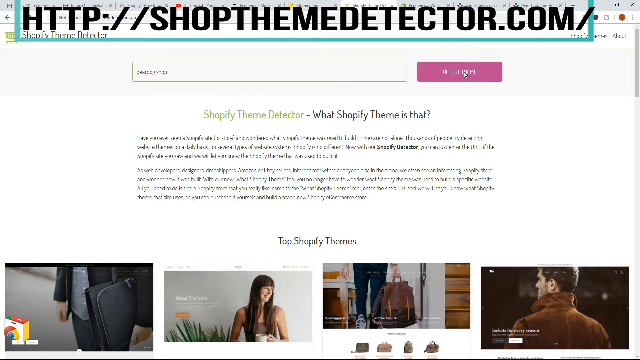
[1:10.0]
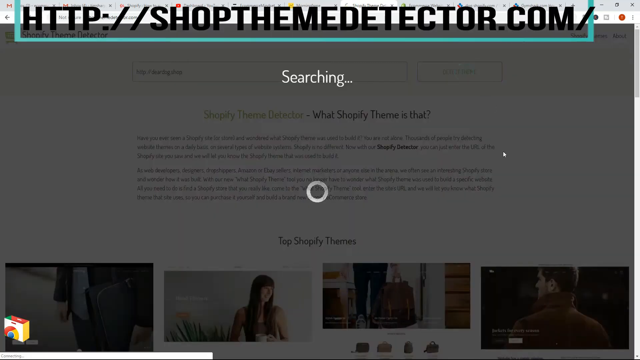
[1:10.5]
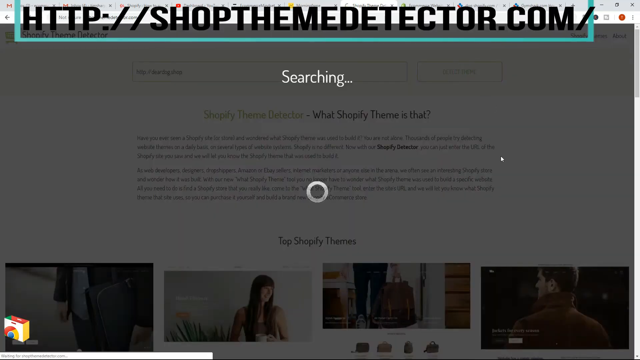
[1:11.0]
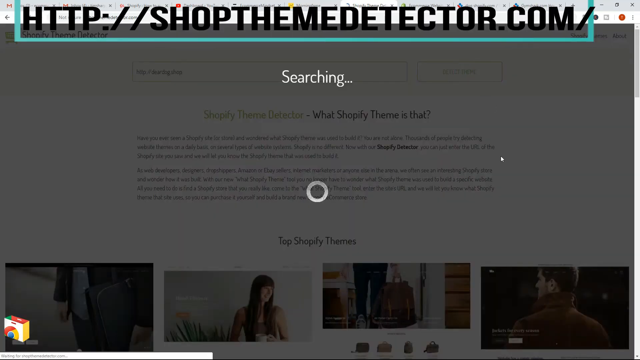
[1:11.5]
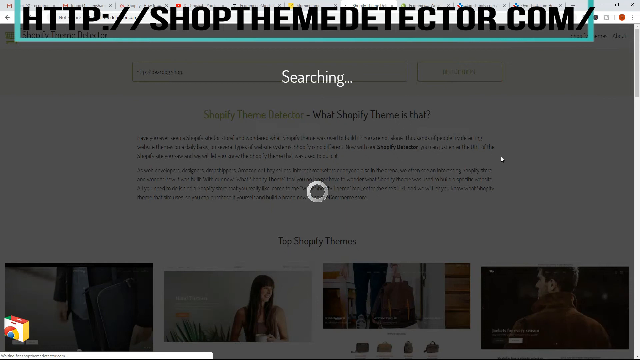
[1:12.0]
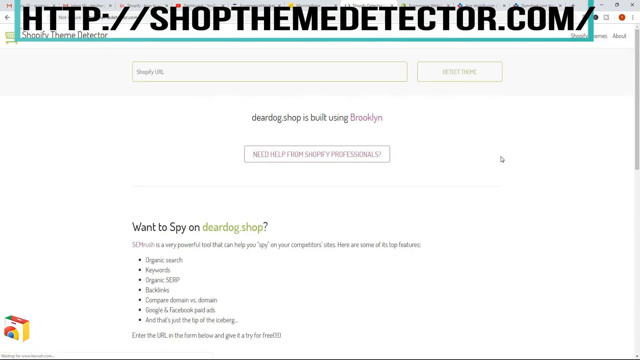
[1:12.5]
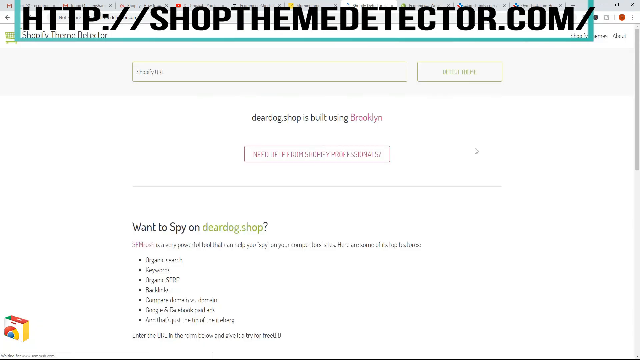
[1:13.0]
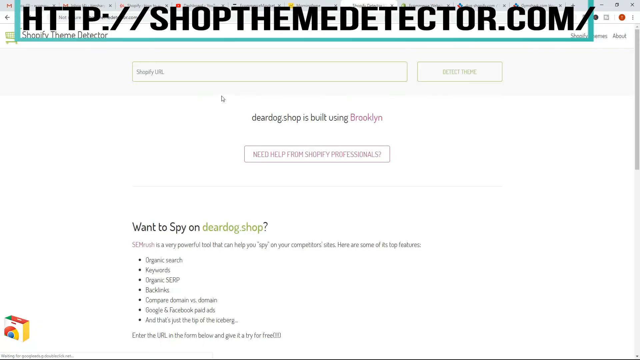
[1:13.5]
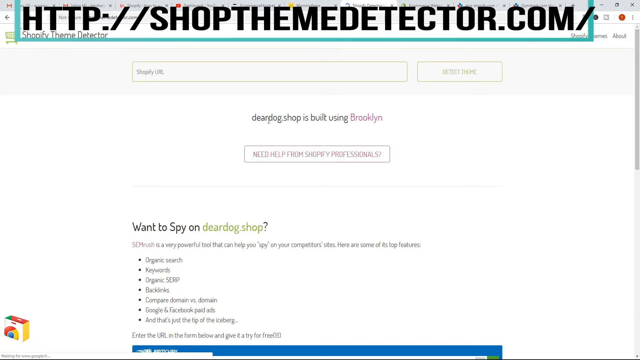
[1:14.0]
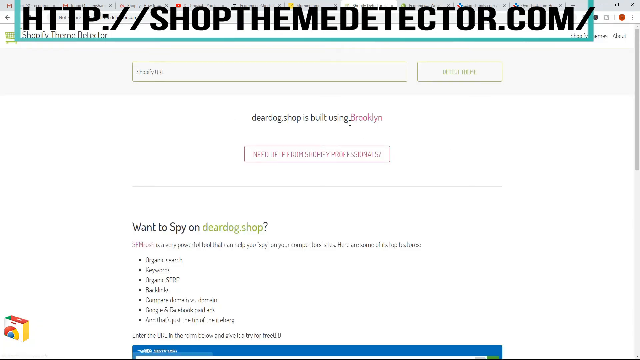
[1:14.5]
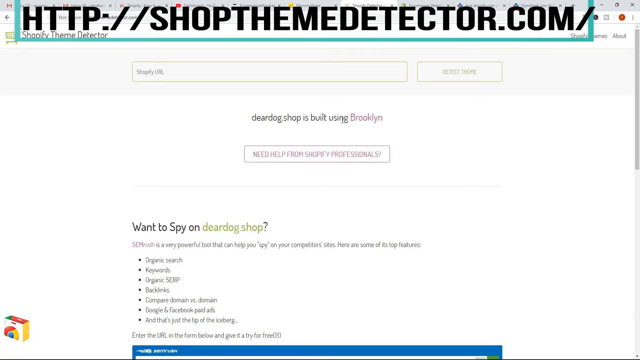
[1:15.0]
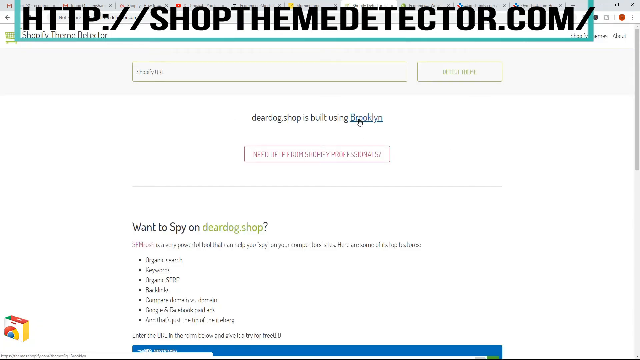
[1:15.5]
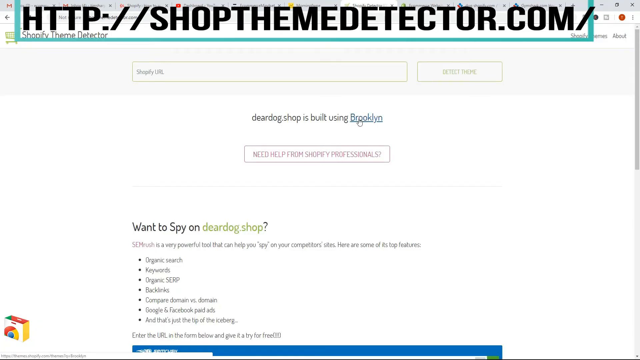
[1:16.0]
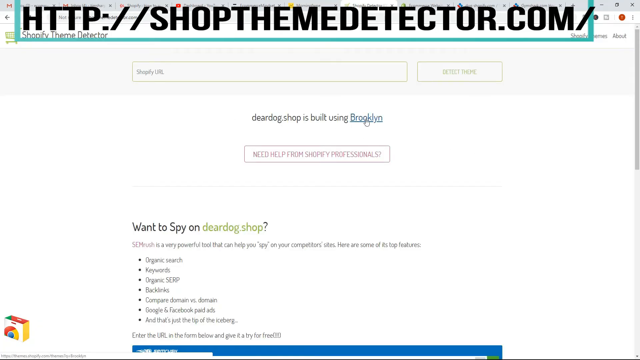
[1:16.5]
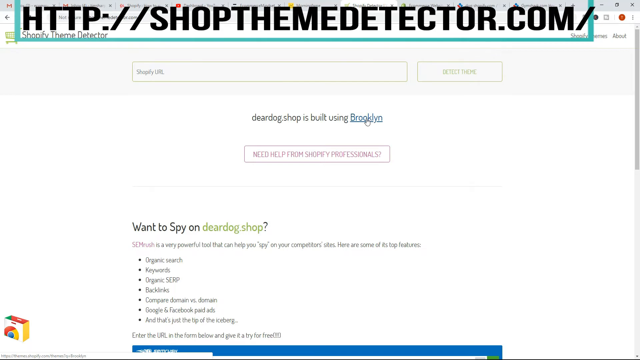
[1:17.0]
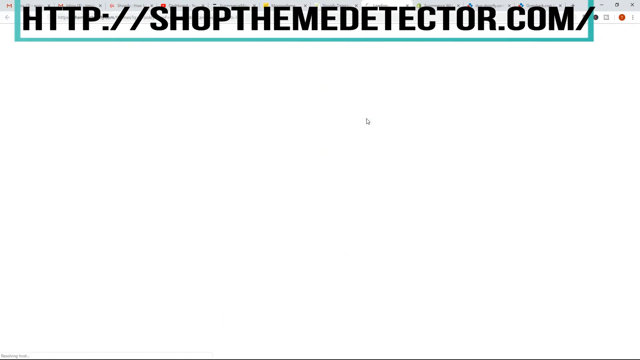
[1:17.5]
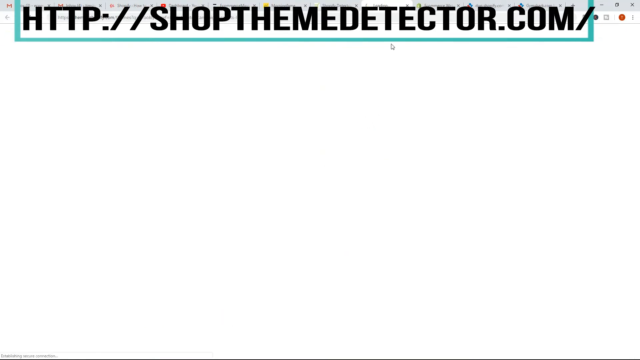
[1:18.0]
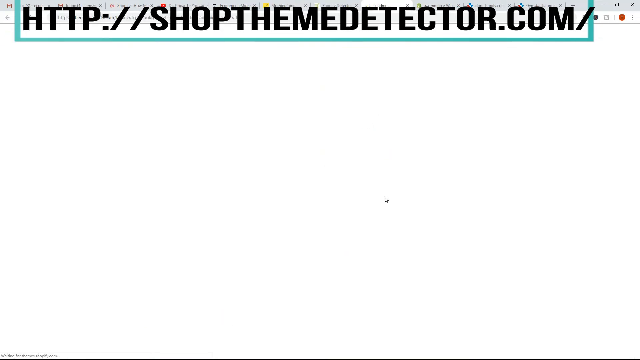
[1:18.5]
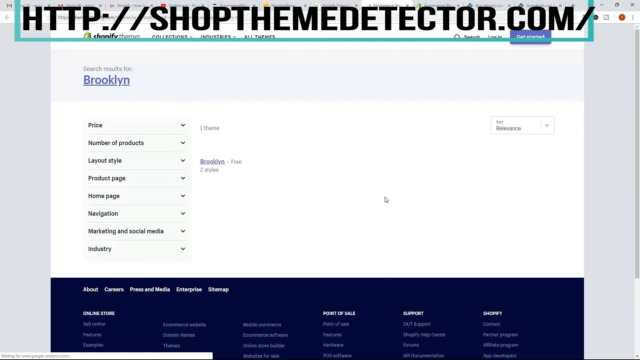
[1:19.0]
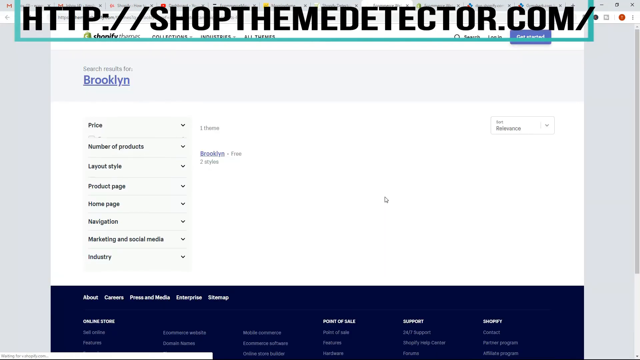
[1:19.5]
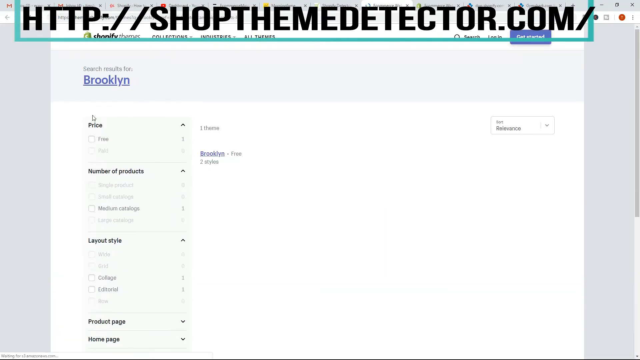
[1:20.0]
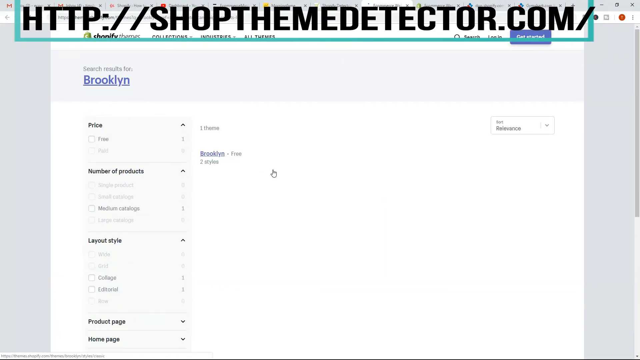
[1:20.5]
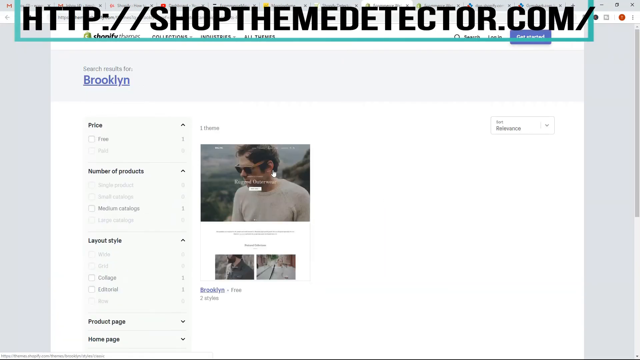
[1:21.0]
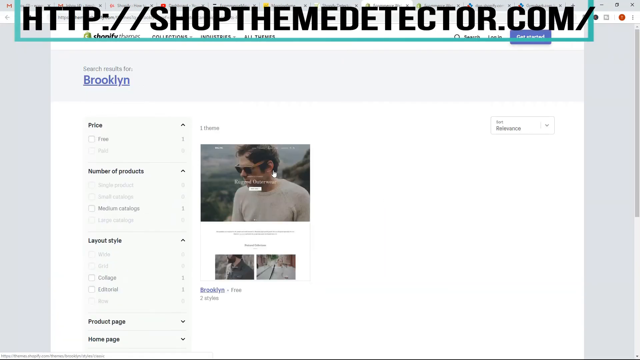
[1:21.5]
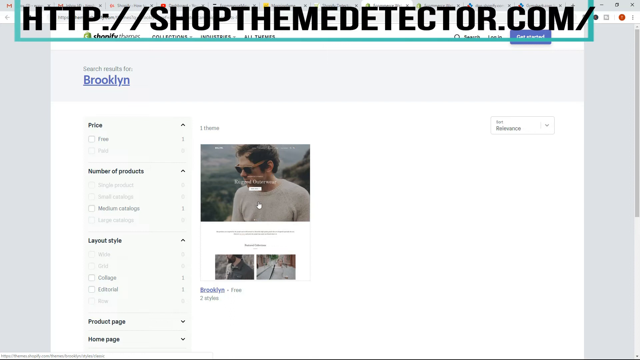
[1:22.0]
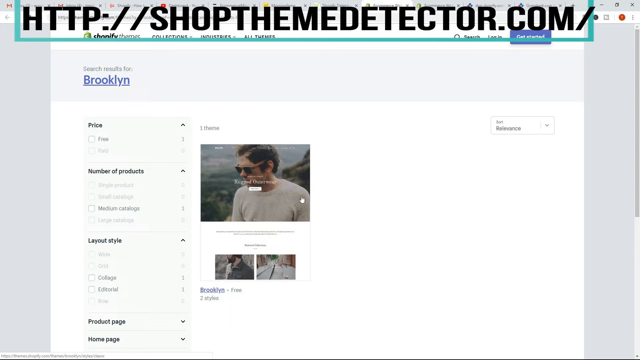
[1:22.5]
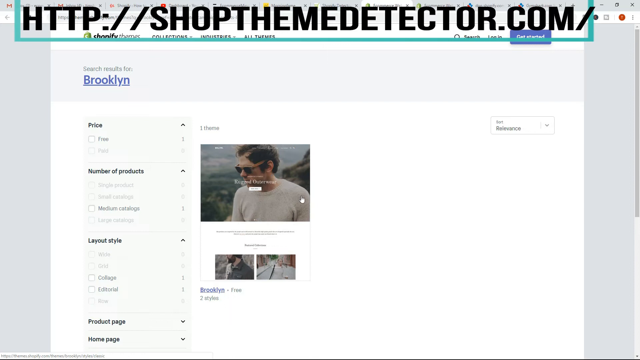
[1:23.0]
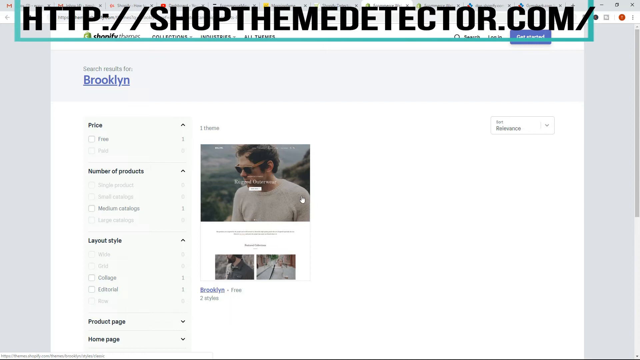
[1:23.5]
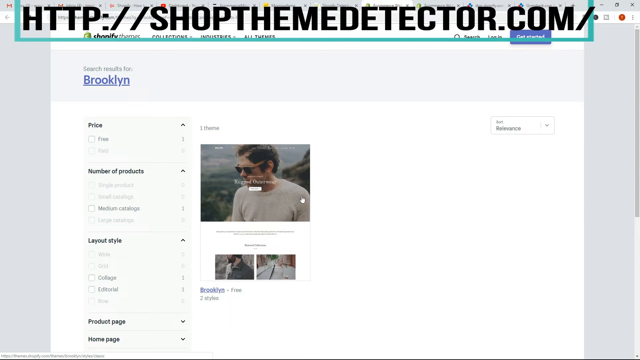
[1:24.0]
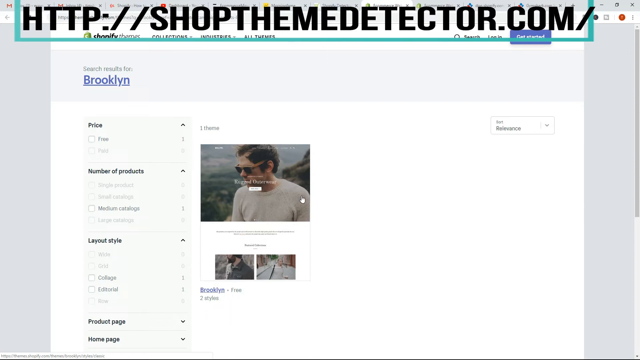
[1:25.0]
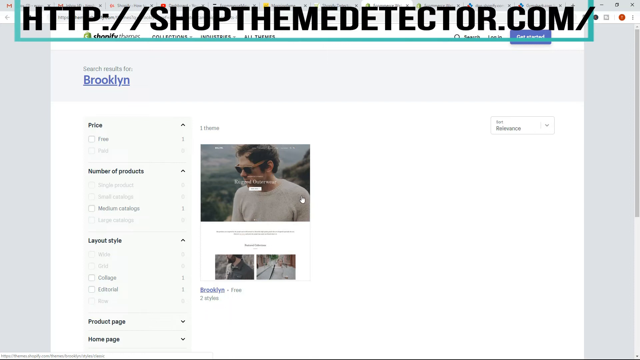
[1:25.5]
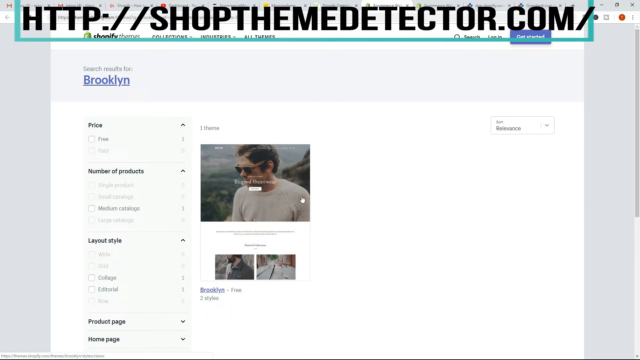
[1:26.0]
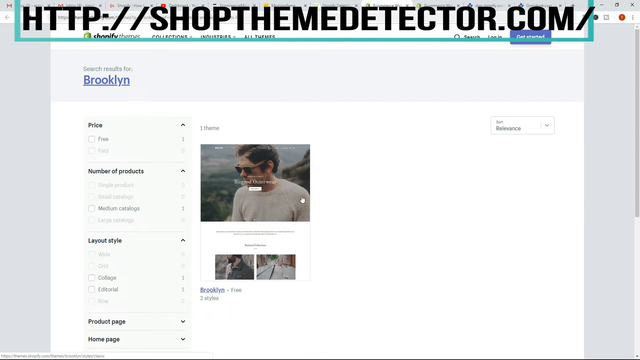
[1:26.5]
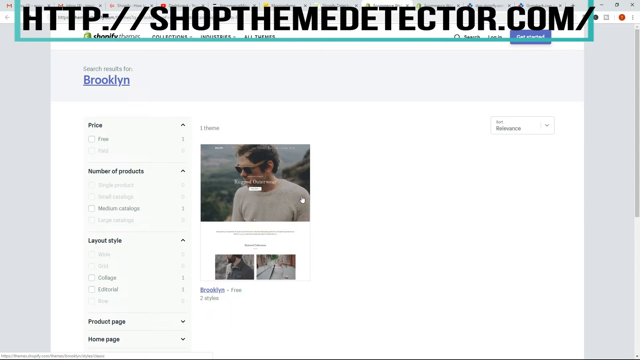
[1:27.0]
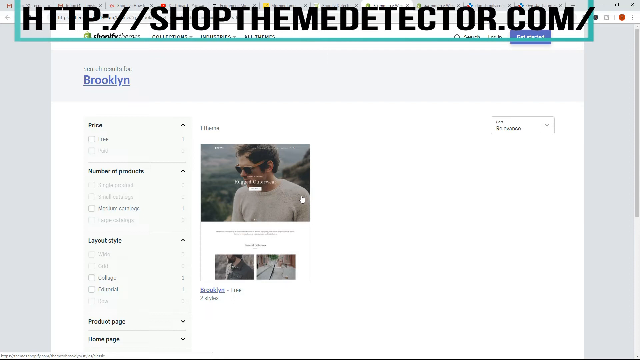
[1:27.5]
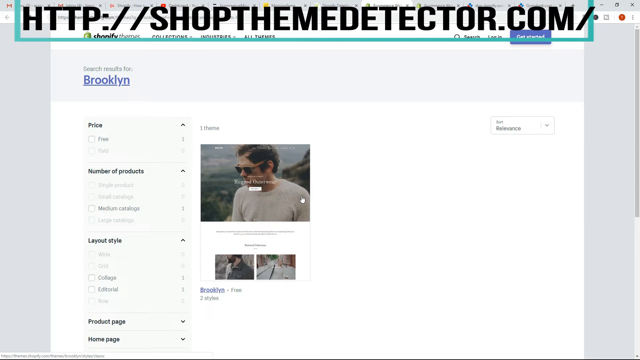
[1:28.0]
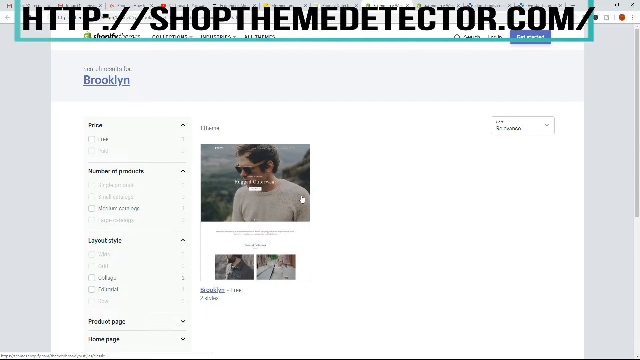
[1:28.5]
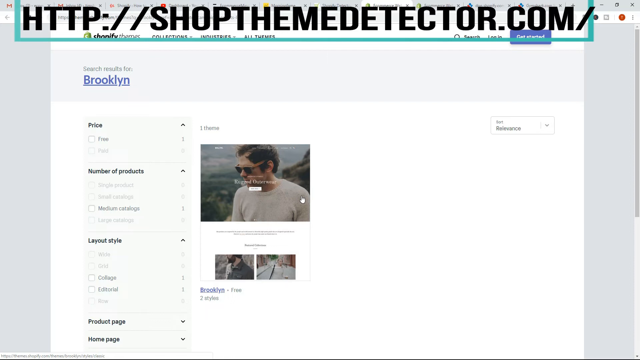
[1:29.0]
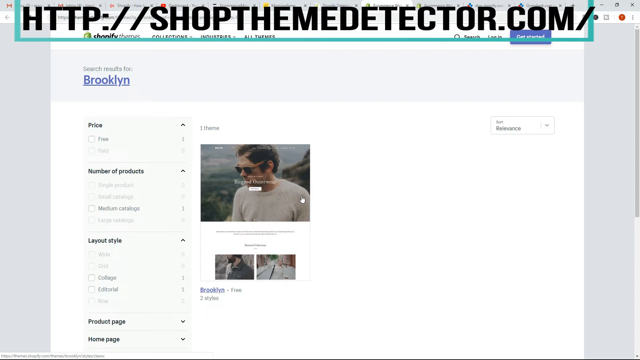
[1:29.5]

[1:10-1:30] A search is made for Deer Dog Shop using the search engine built into the site, and then the search results for Brooklyn are shown. Searching the word Brooklyn brings up many results, including products and cities. The site address is shopthemedetector.com.